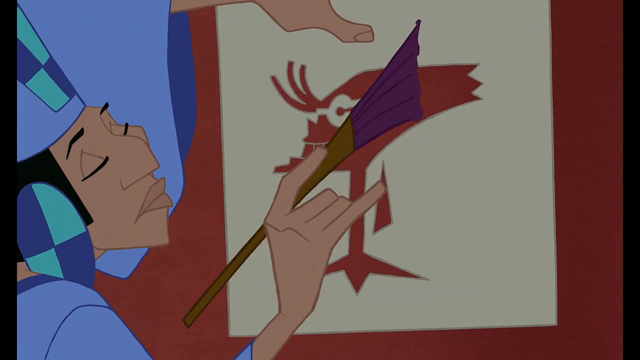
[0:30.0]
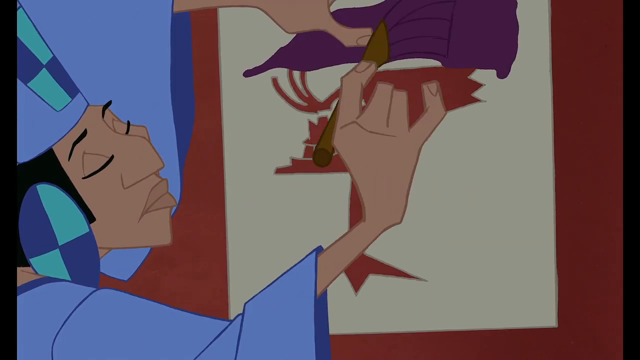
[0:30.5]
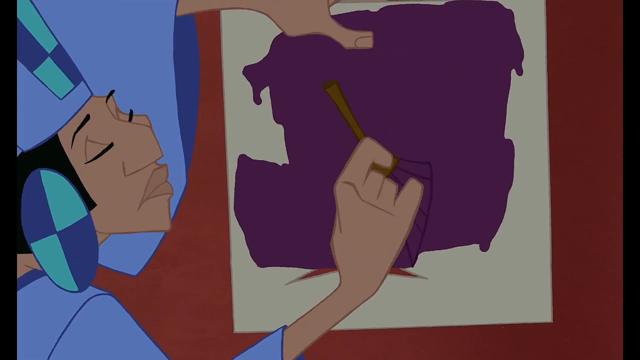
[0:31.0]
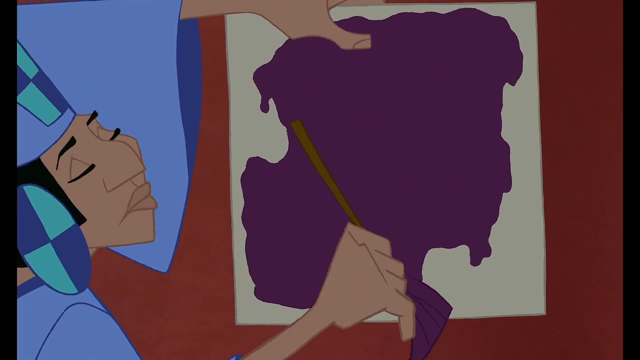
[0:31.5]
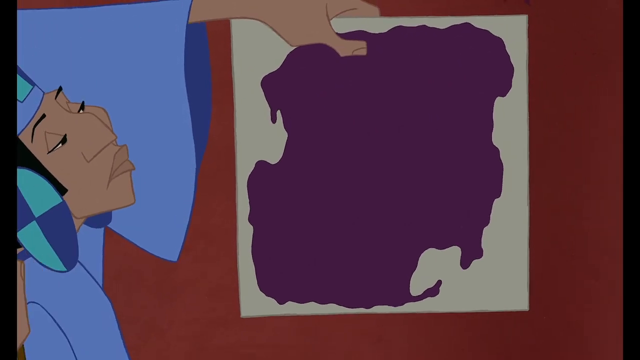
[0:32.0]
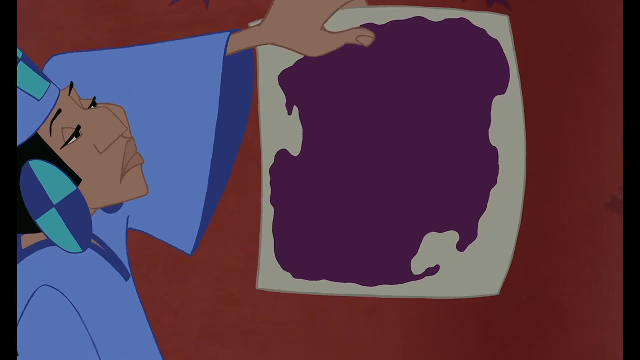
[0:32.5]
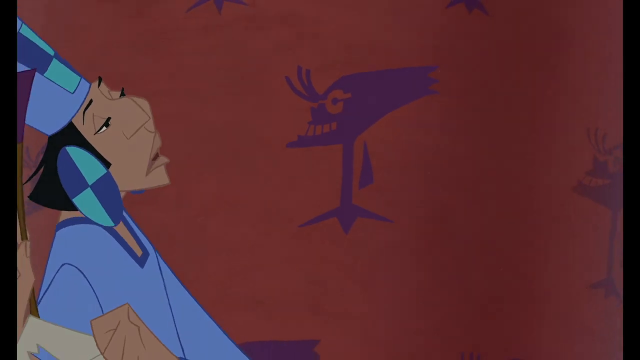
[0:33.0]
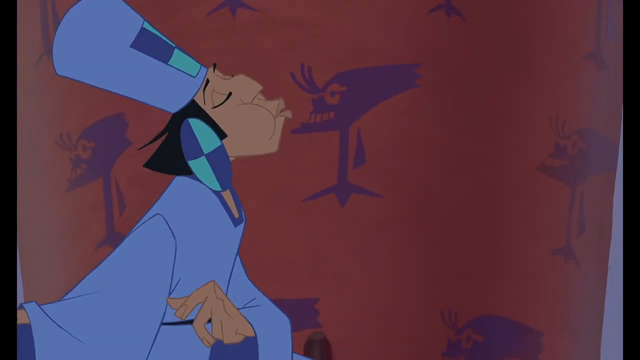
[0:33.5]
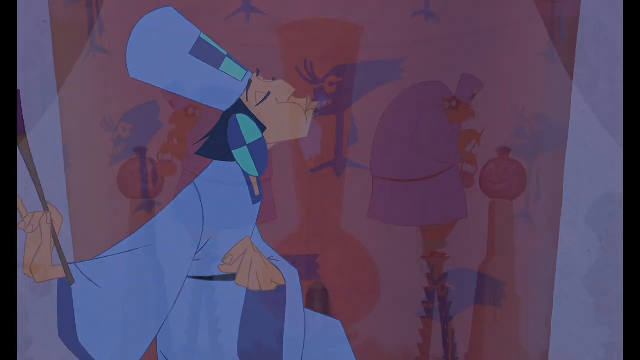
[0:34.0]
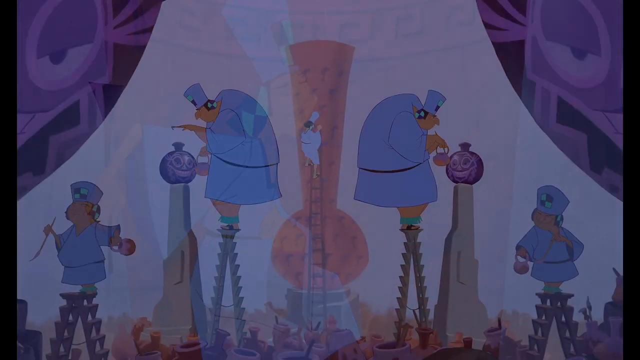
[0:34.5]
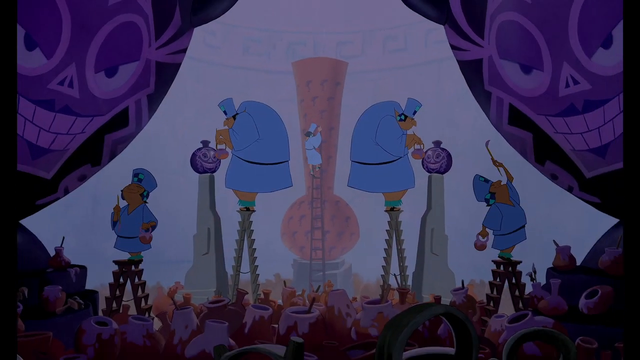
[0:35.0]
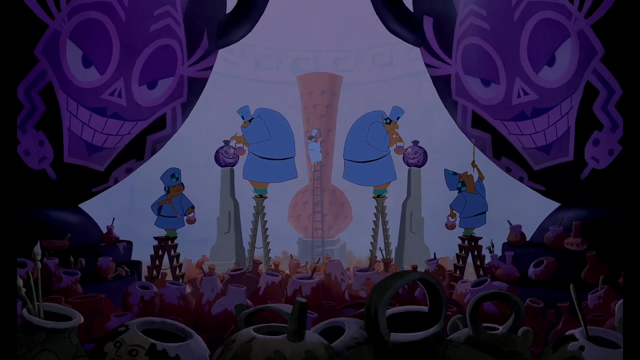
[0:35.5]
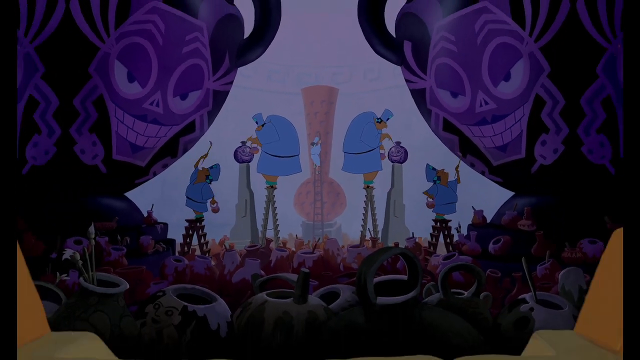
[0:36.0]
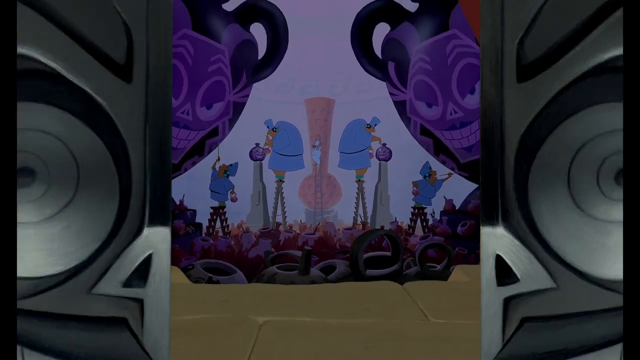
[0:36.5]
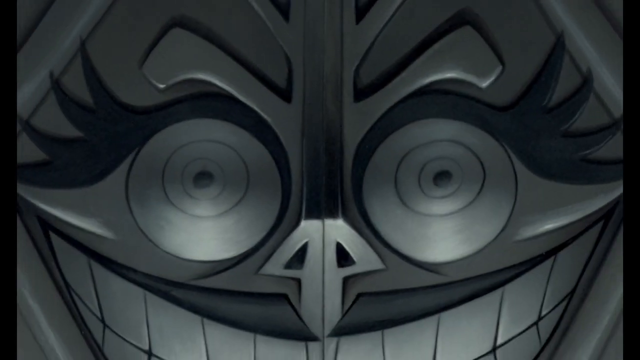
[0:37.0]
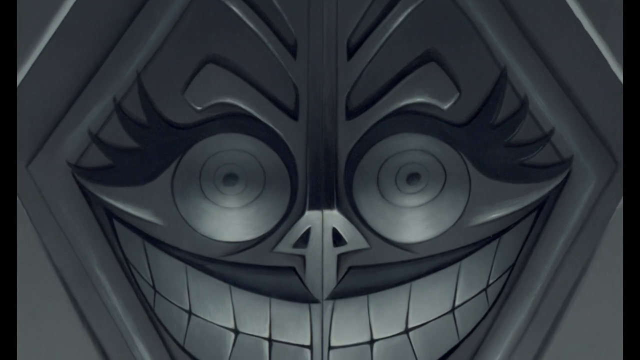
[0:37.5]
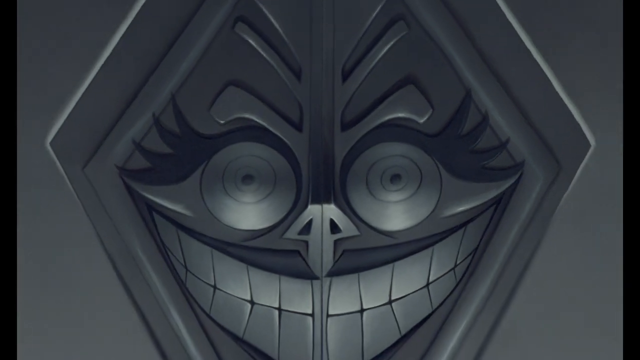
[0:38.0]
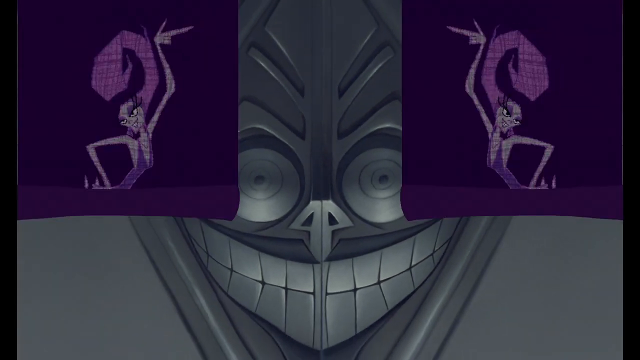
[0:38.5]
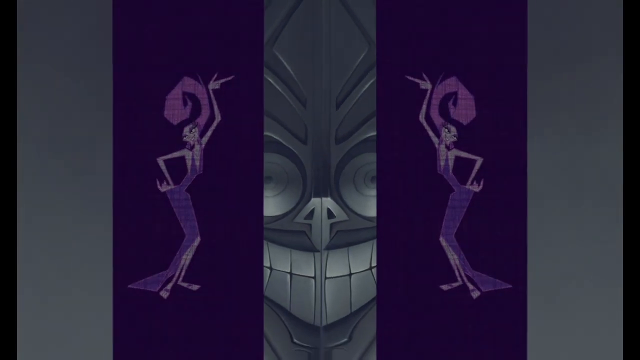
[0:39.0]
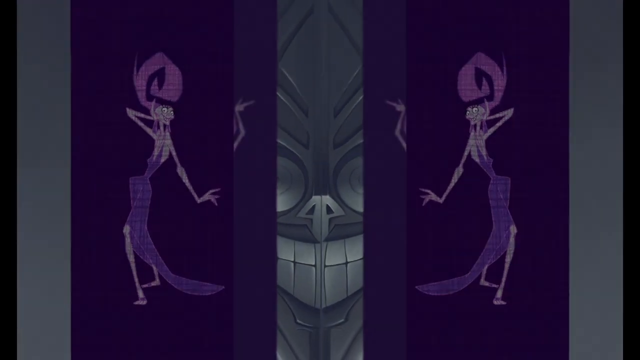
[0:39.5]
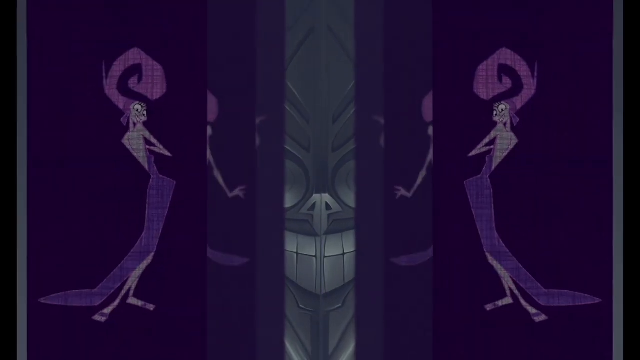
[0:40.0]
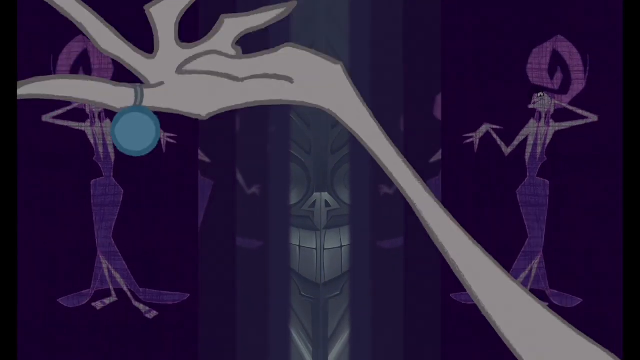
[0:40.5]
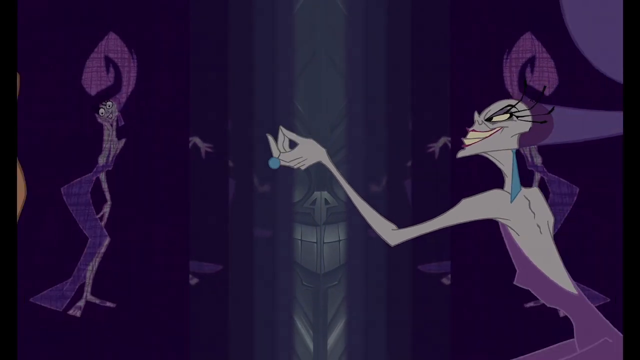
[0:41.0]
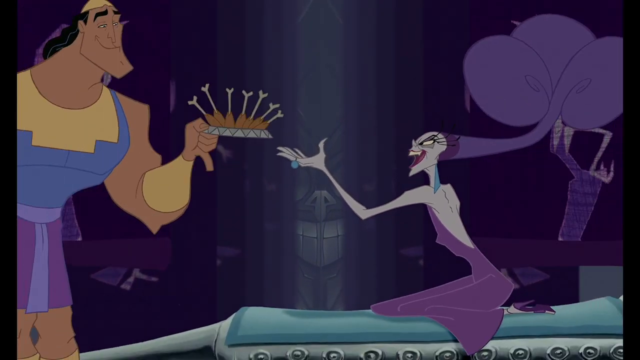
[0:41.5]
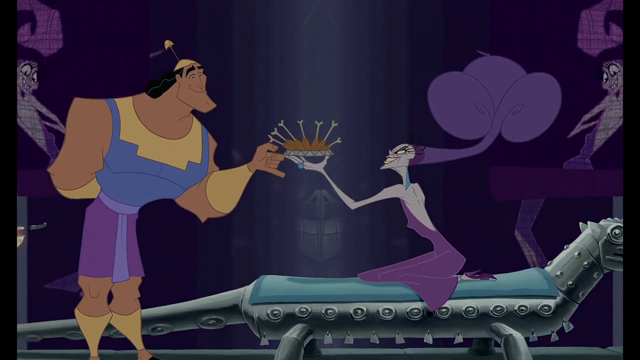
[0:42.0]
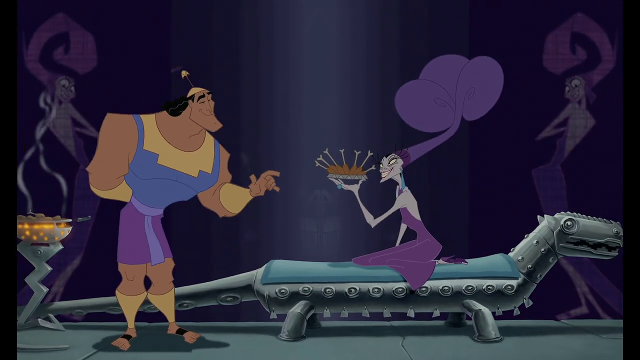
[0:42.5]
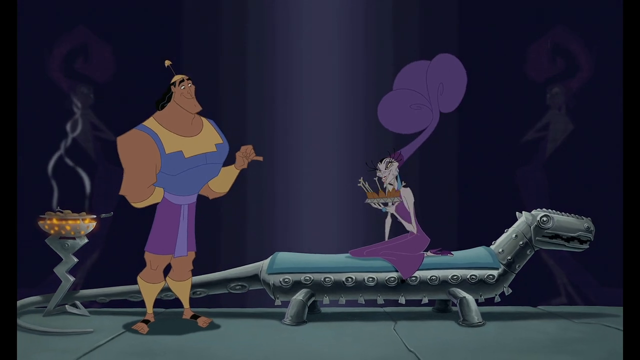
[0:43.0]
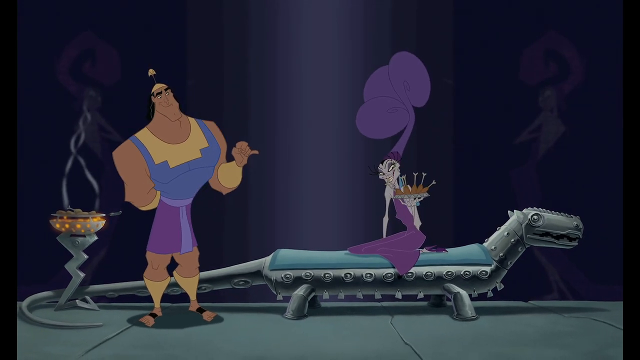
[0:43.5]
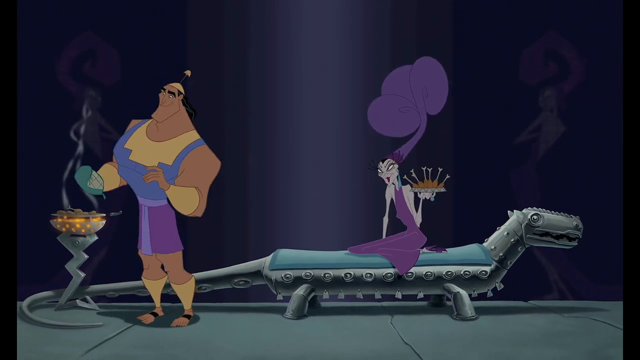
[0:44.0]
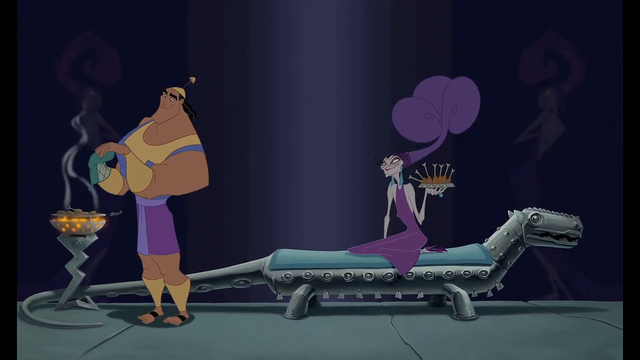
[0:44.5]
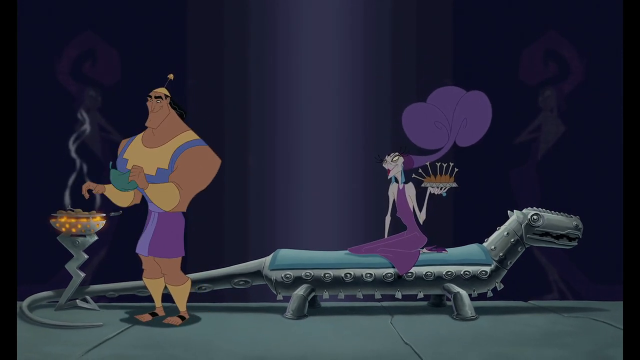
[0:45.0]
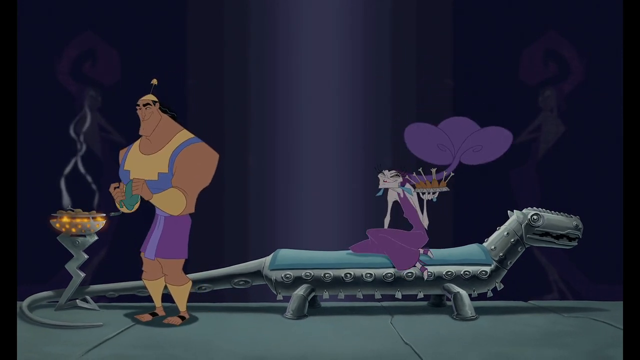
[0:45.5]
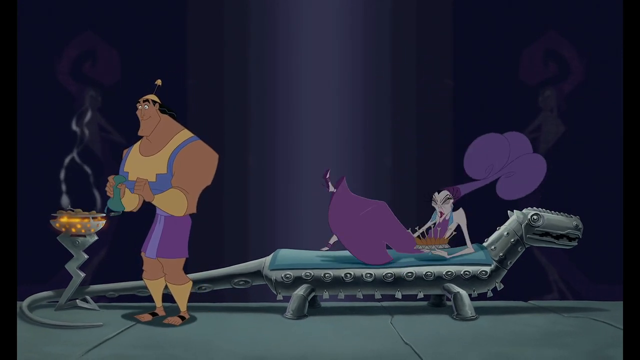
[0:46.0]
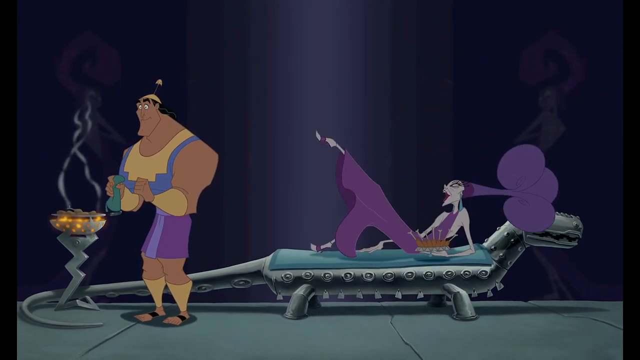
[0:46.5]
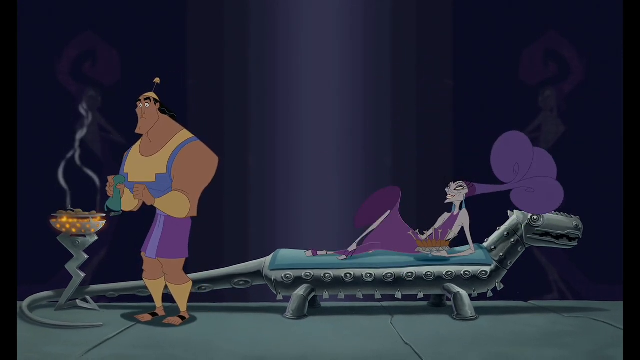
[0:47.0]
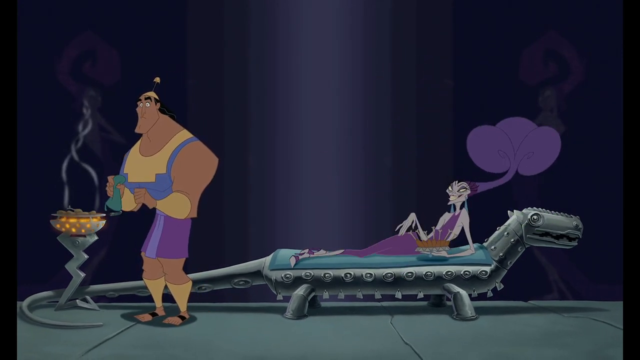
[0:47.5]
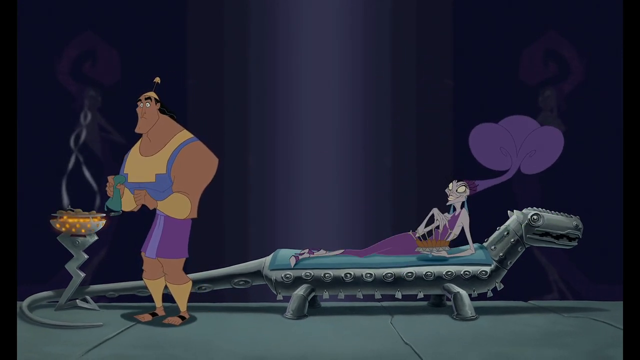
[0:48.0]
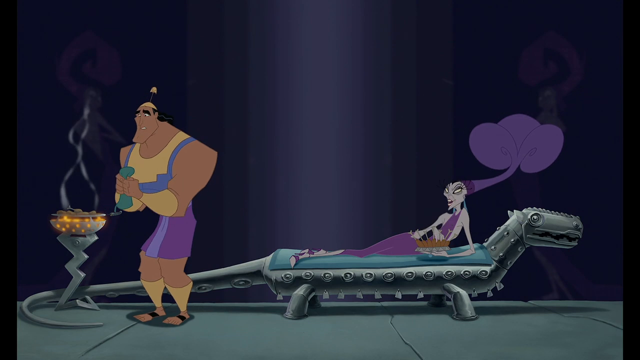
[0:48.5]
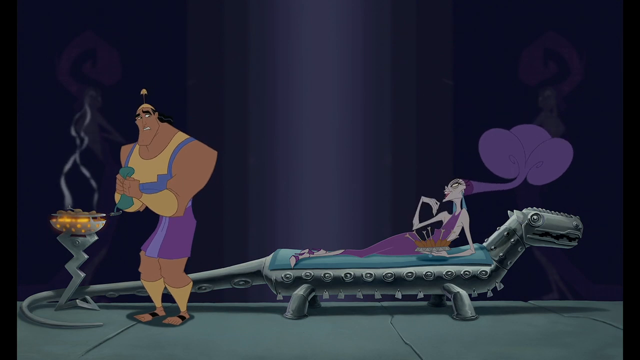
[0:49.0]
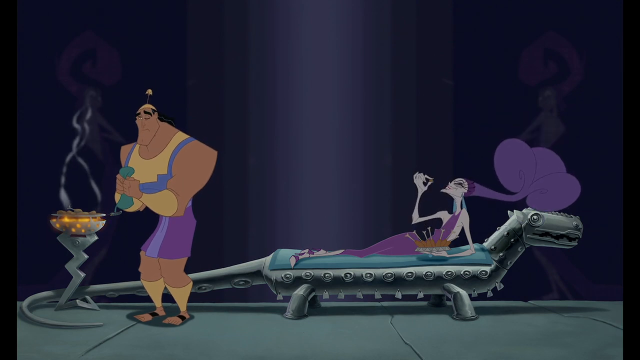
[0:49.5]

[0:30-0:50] An Egyptian woman wears a purple and green design hat, purple and green earrings, and a light purple and dark purple shirt. She seems to be the artist painting depictions of the queen in red all around town. A close-up shows her using her brush to make designs as she paints them on buildings. The image is painted on doors, on windows, everywhere. Later the queen is shown lying on a bed while being fed grapes by the brawny, strong man who stood next to the original ruler's coffin; here he is only a servant and appears scared for his life.